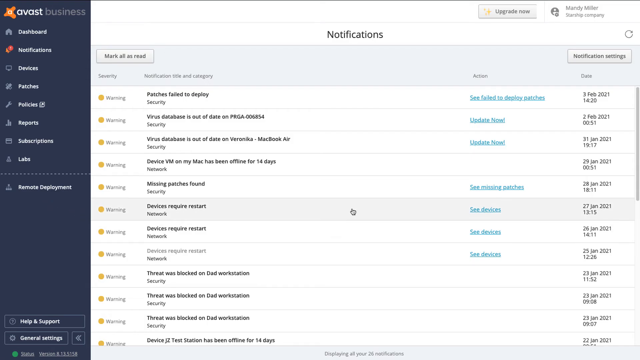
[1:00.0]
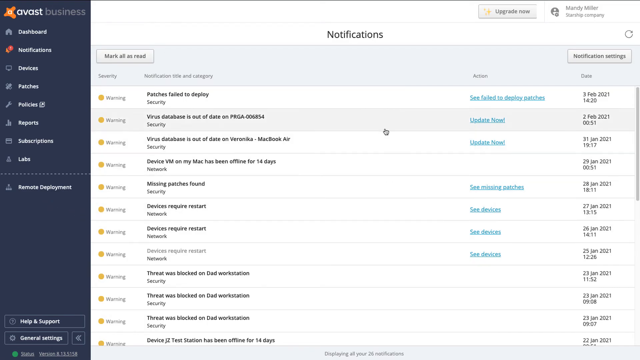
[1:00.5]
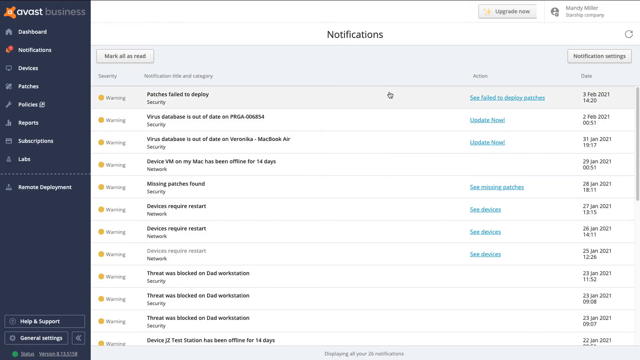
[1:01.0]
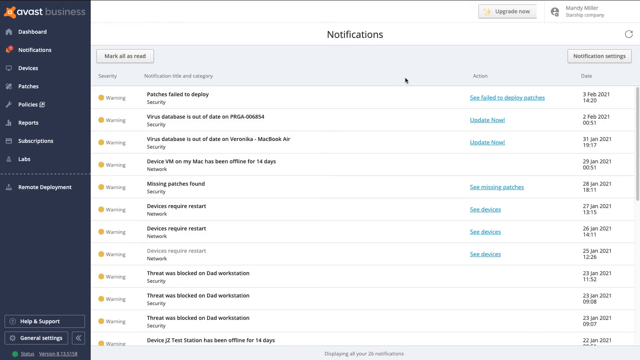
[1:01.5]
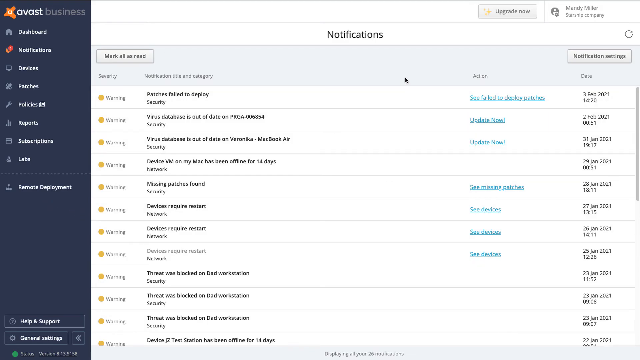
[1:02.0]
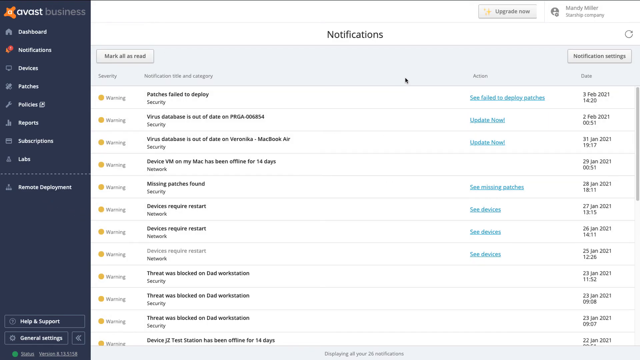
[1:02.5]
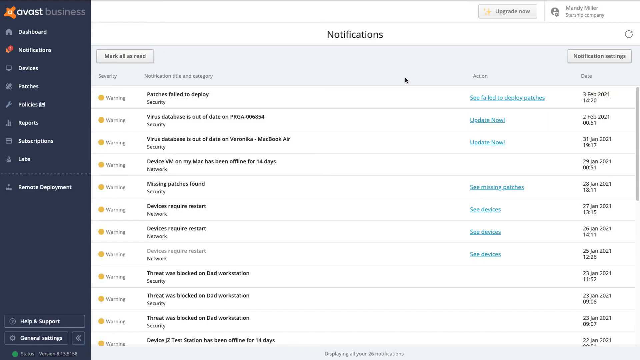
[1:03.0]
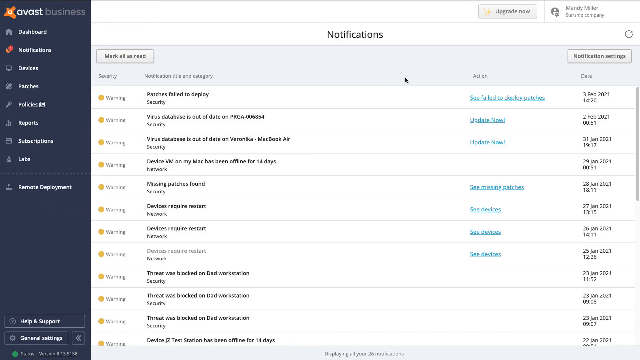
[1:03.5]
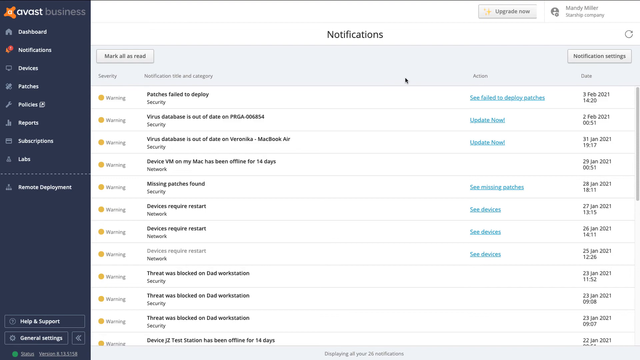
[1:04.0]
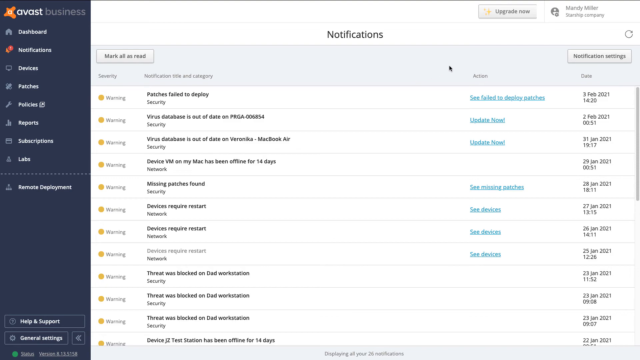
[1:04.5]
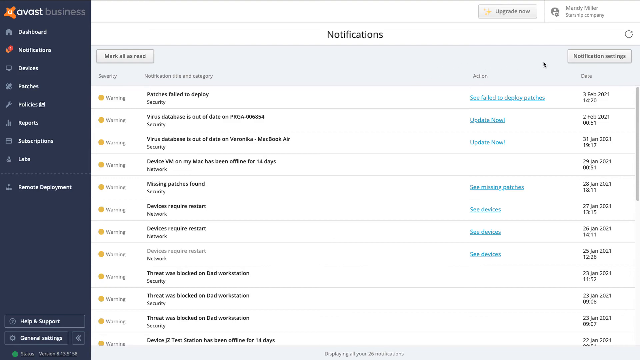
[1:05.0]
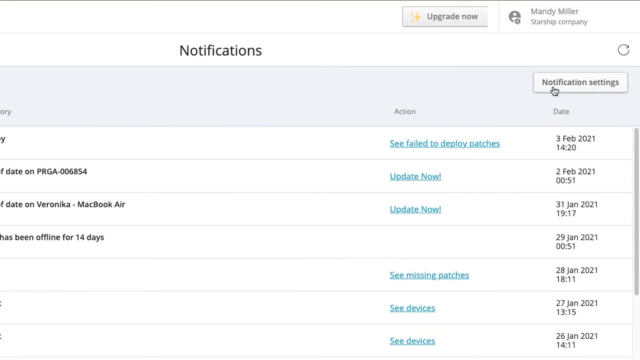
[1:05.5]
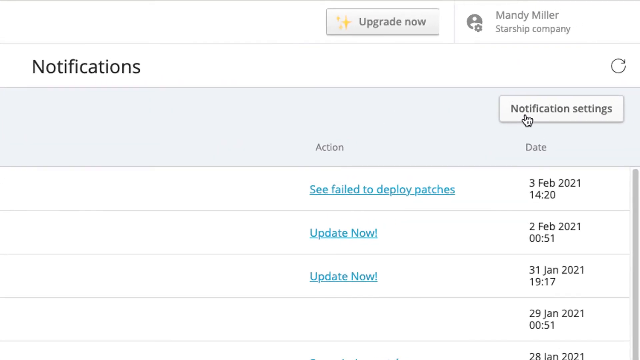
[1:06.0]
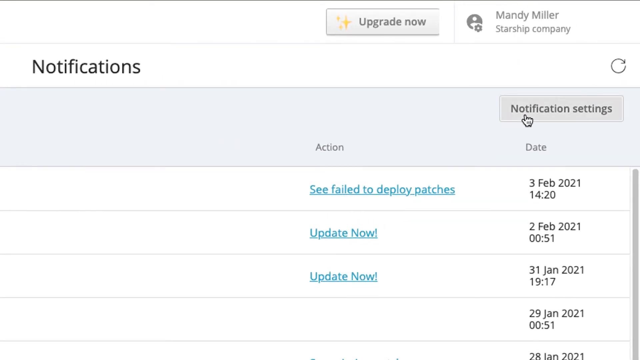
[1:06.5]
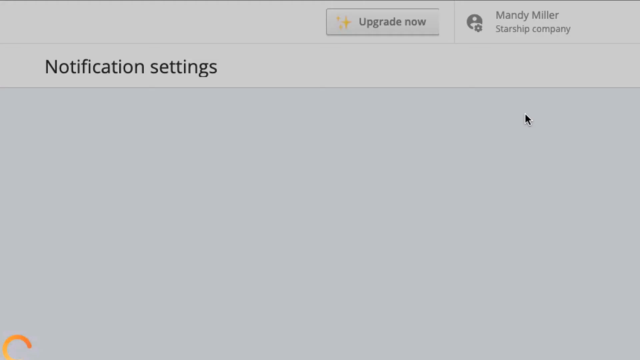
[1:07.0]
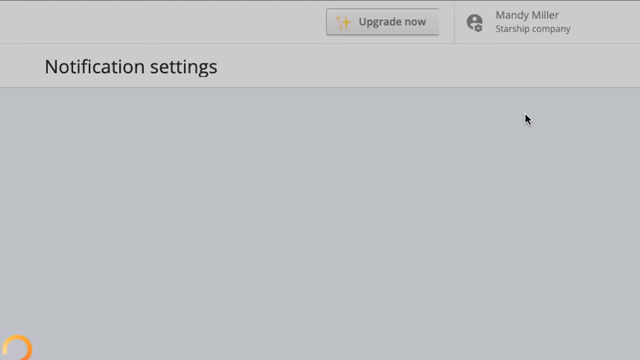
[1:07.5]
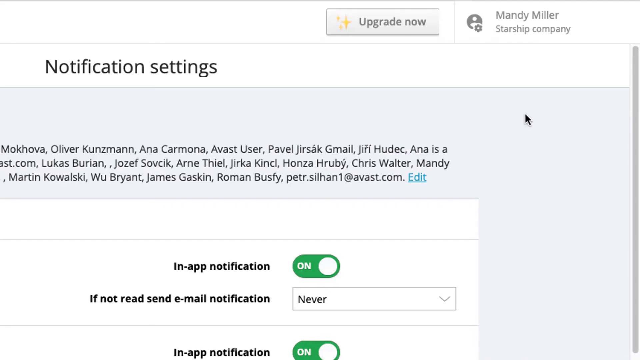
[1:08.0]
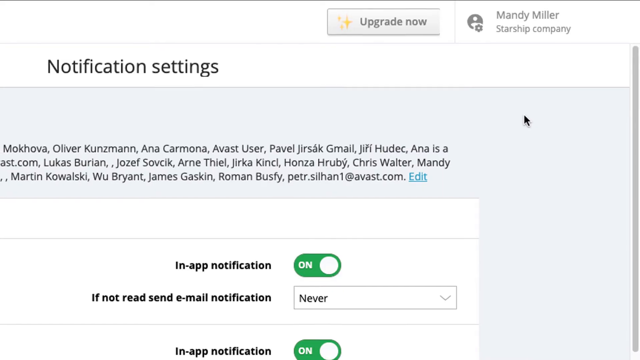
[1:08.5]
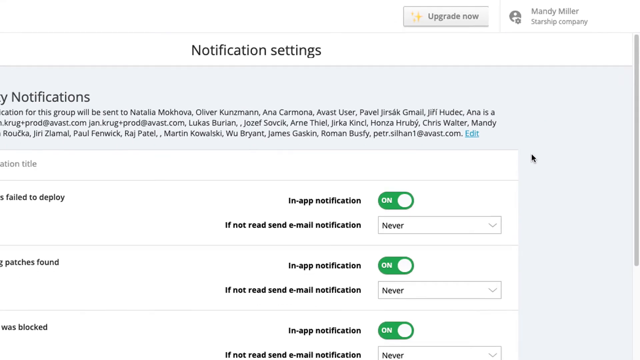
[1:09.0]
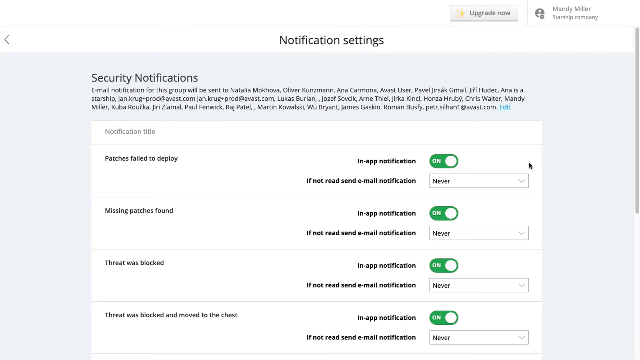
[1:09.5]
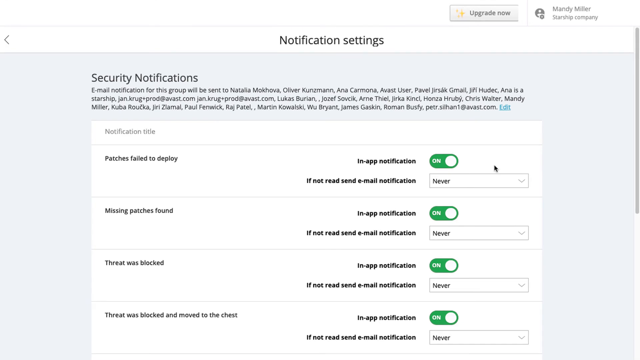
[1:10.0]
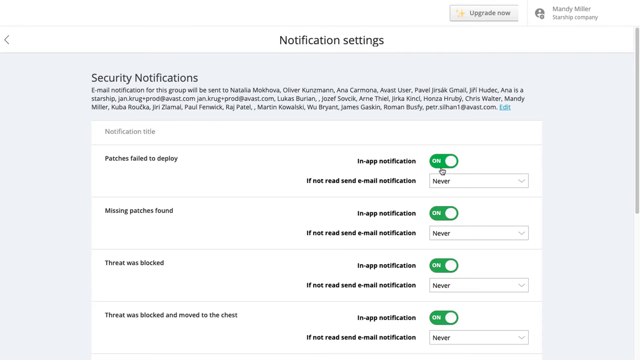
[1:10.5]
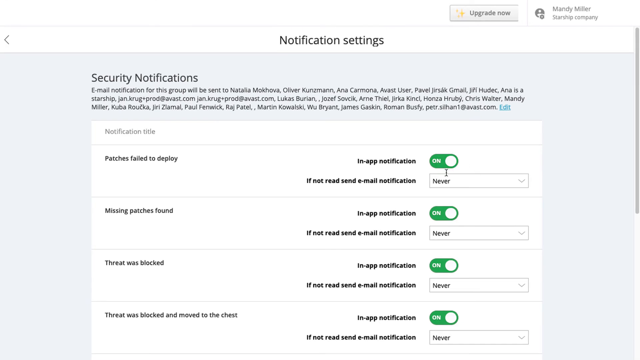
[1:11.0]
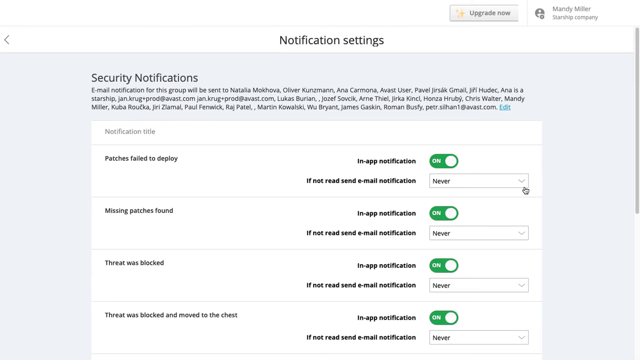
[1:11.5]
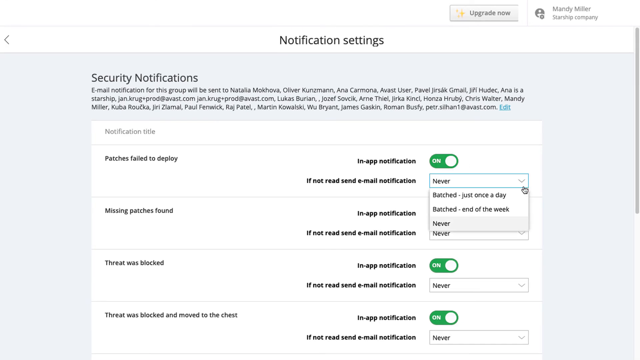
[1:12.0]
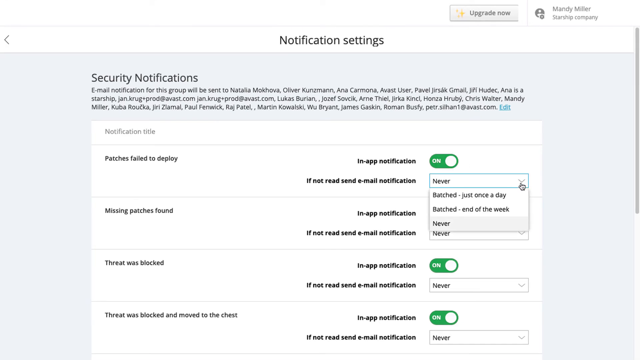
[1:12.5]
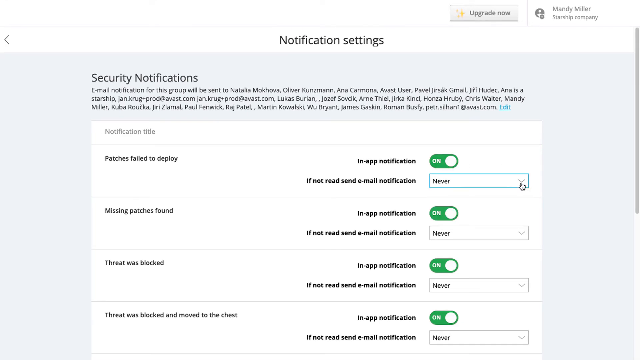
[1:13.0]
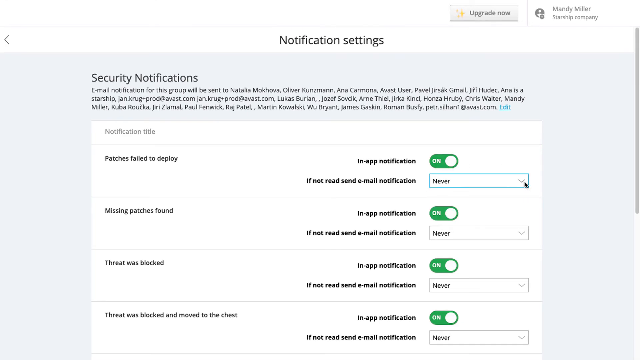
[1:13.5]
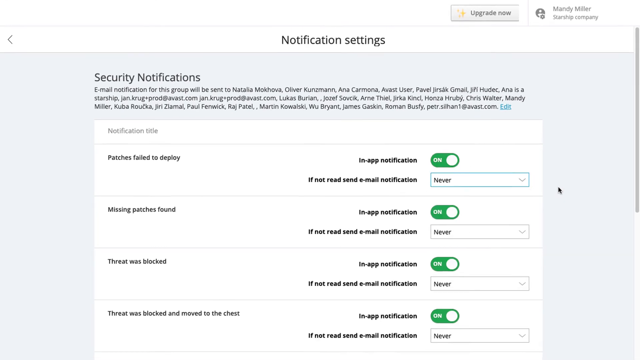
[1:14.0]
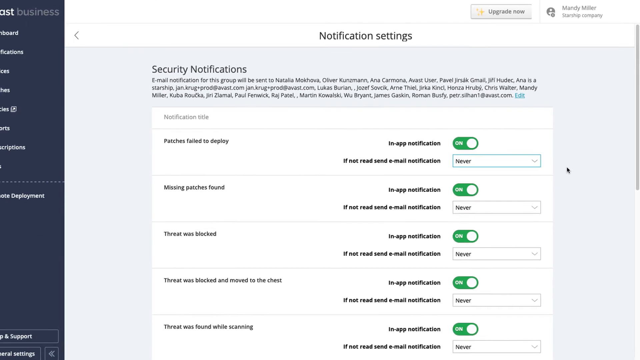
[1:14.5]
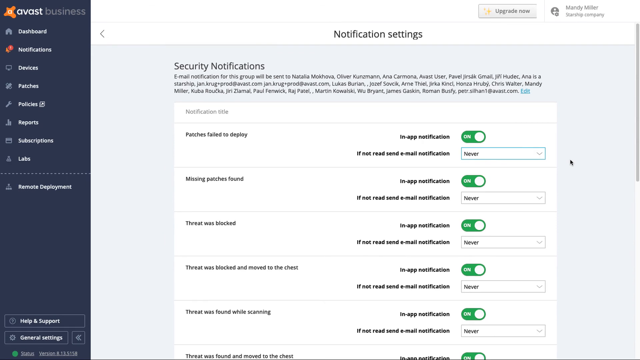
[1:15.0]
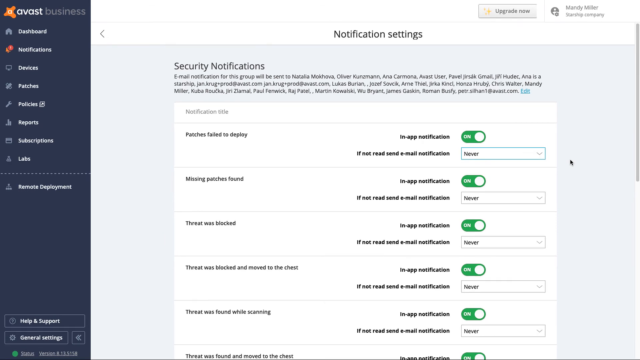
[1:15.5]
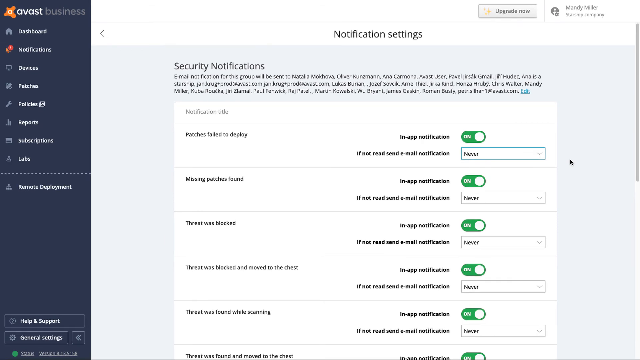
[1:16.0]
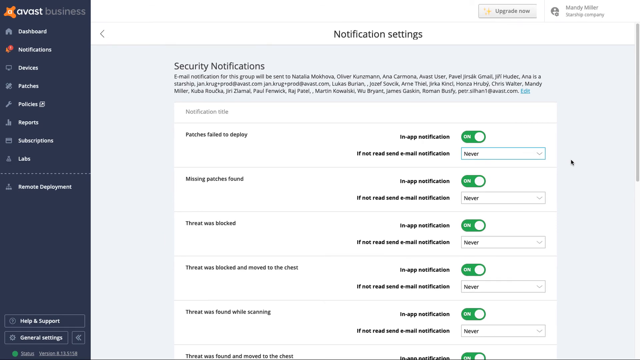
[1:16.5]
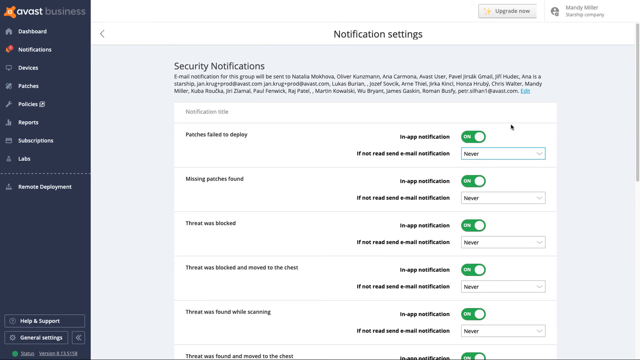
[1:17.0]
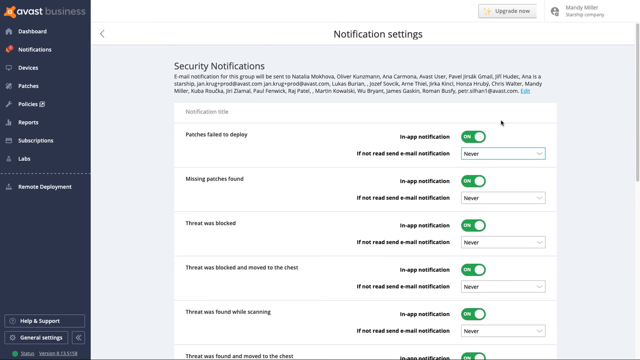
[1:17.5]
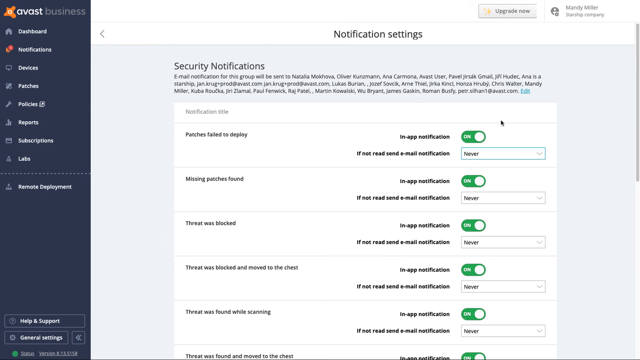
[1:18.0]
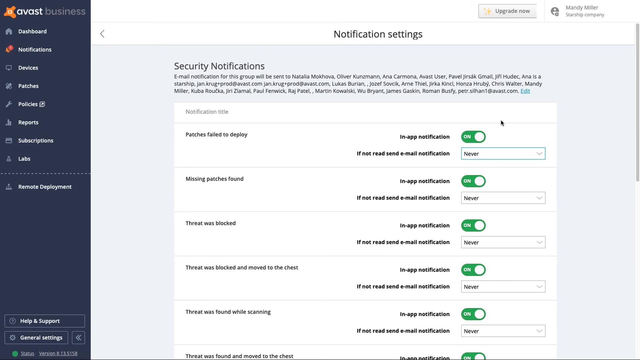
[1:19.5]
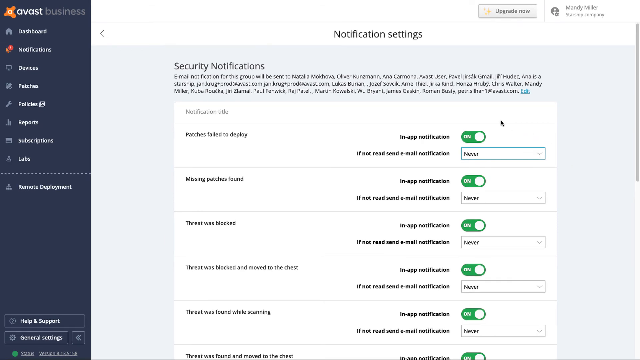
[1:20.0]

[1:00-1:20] A notification section is shown, related to an Avast business device. Notifications can be opened and are shown popping up. There is an option to upgrade.